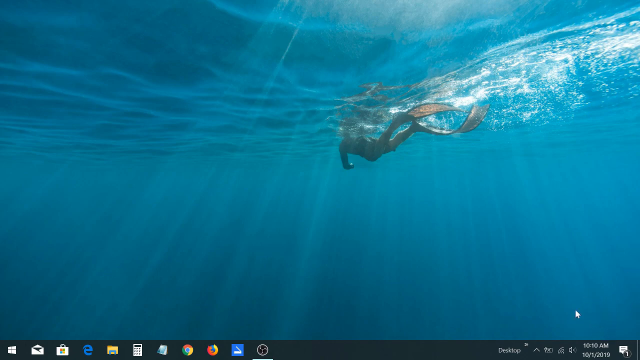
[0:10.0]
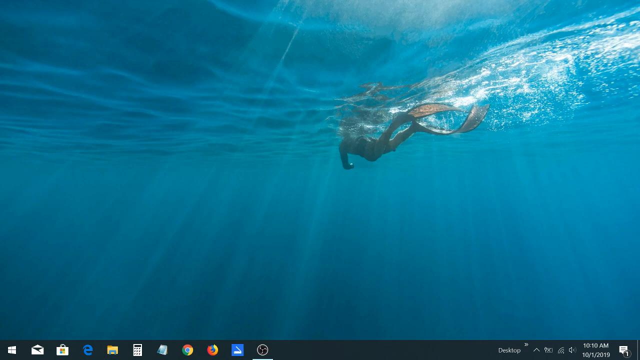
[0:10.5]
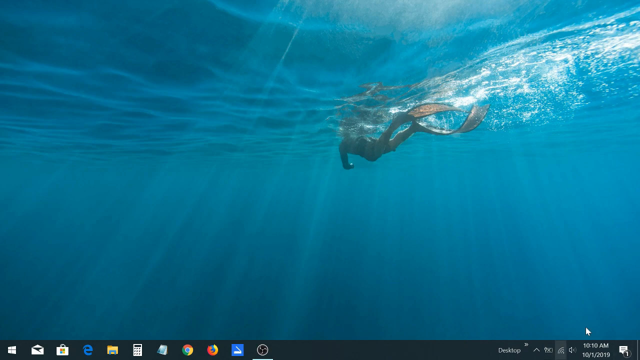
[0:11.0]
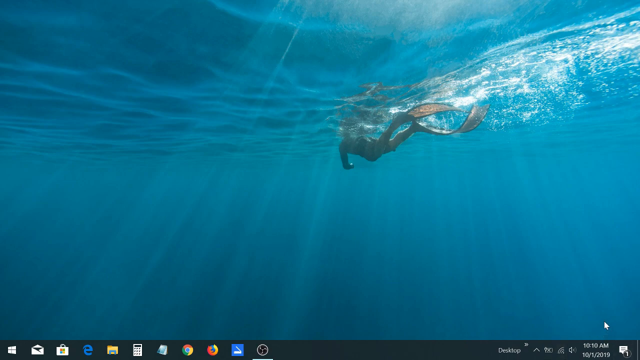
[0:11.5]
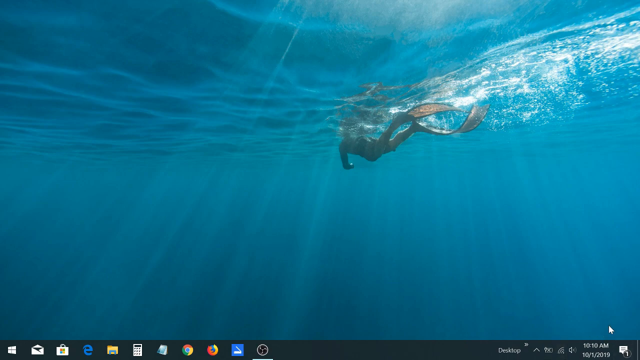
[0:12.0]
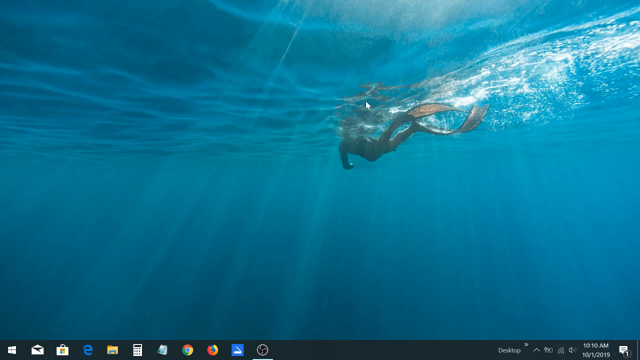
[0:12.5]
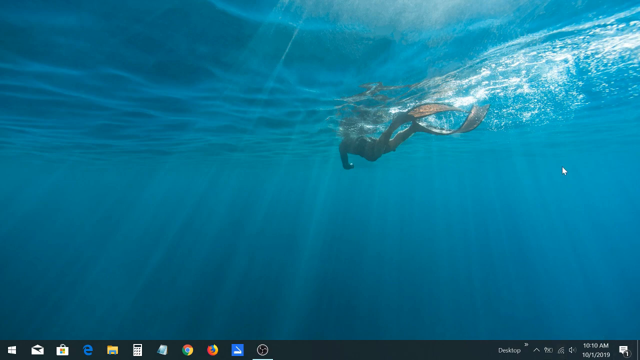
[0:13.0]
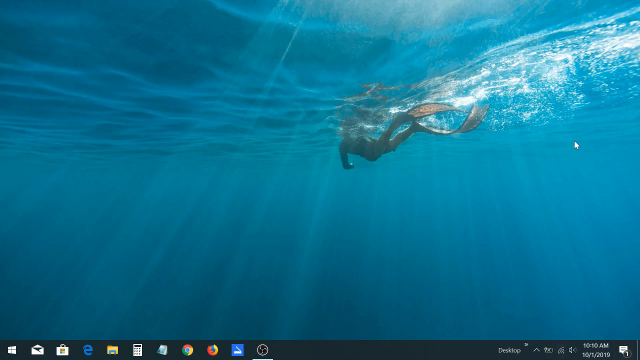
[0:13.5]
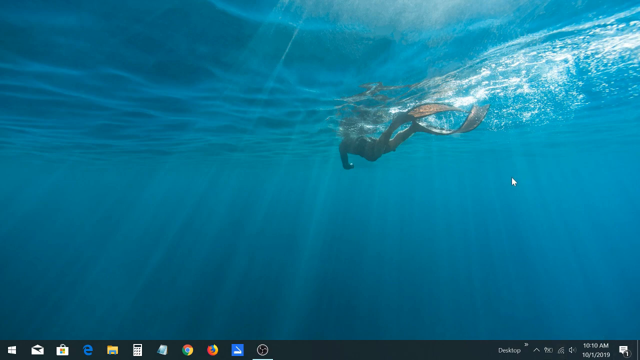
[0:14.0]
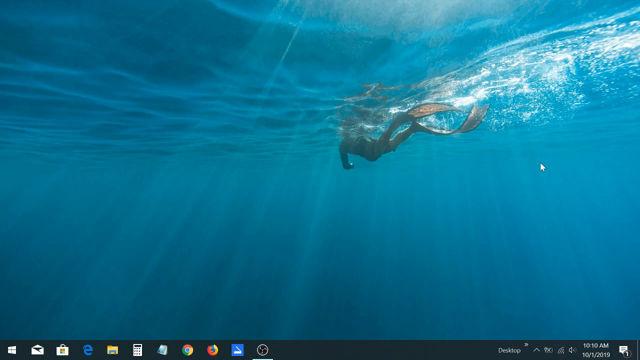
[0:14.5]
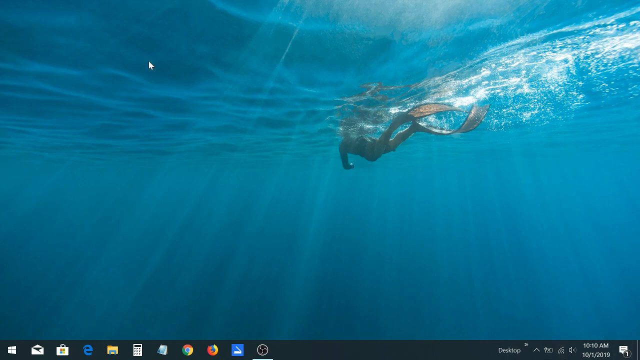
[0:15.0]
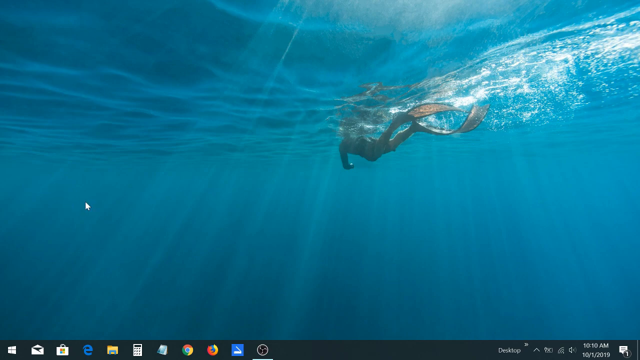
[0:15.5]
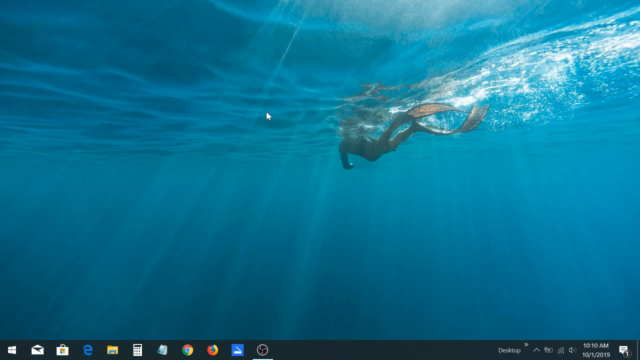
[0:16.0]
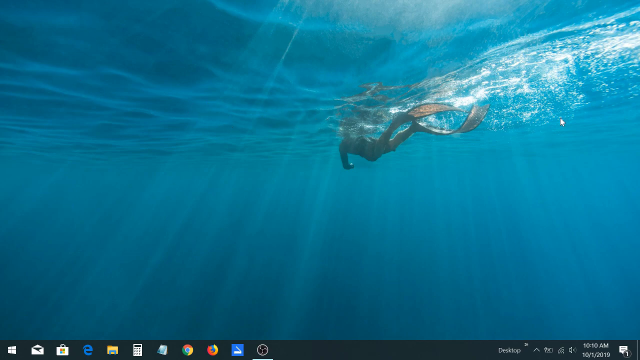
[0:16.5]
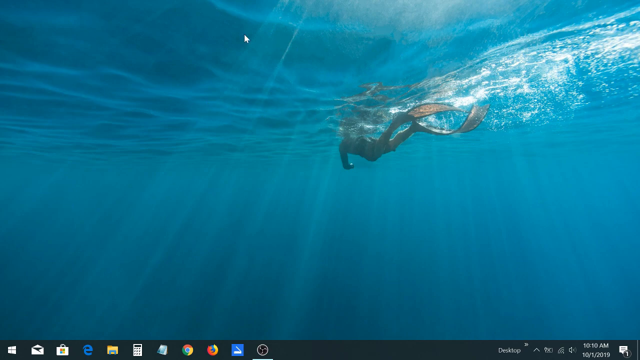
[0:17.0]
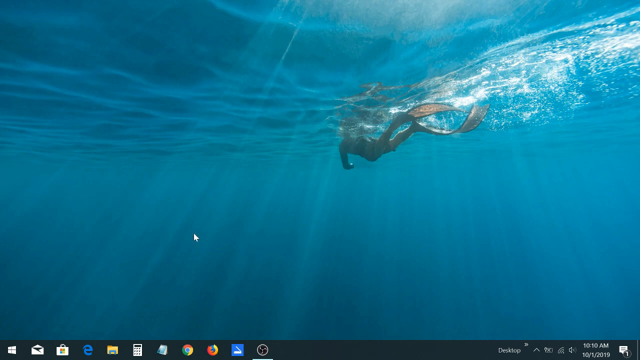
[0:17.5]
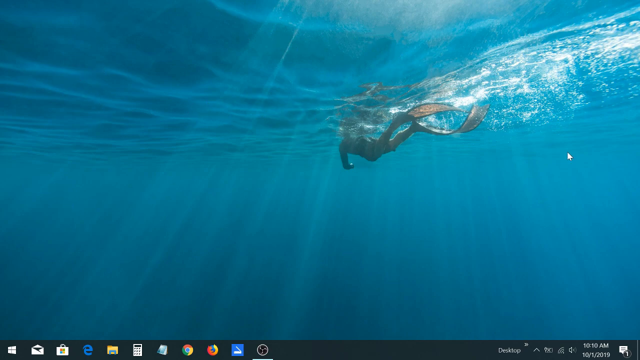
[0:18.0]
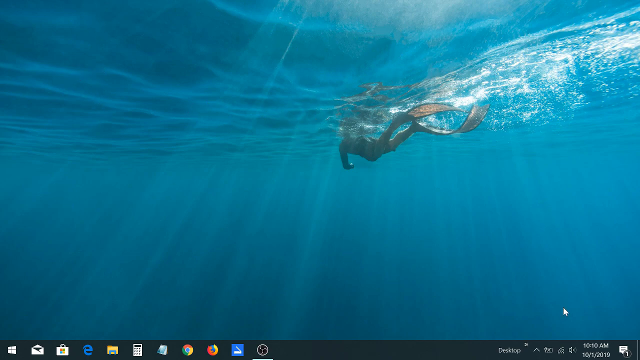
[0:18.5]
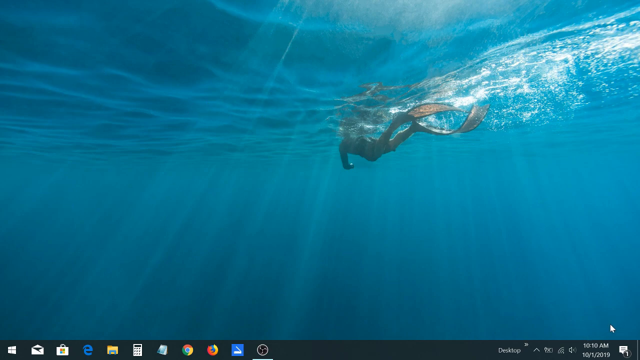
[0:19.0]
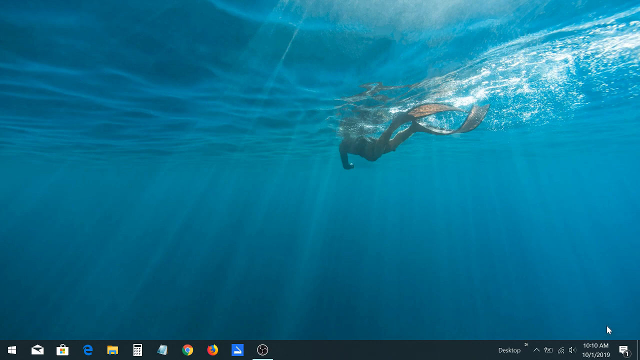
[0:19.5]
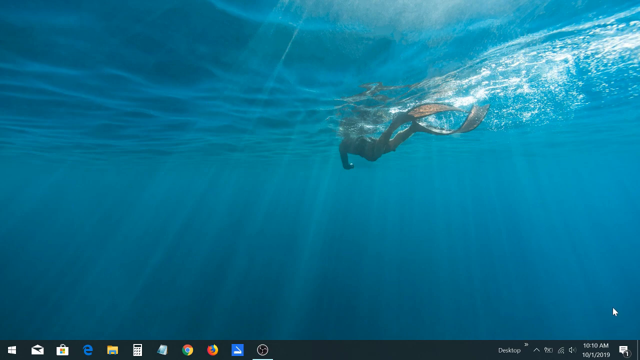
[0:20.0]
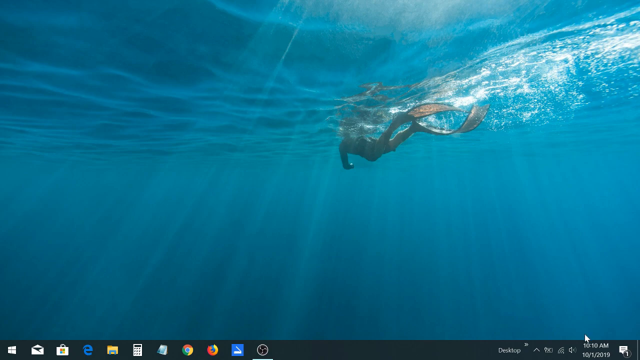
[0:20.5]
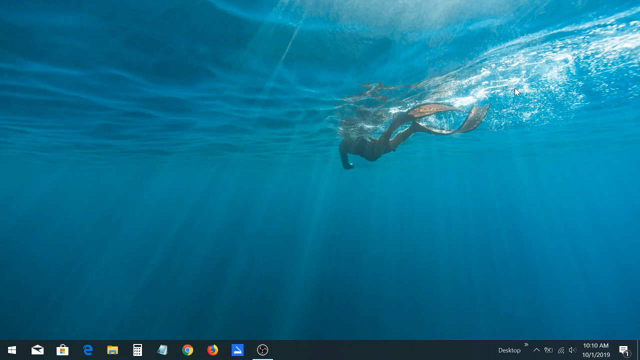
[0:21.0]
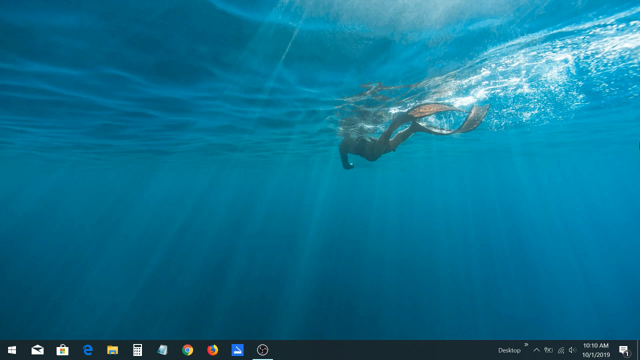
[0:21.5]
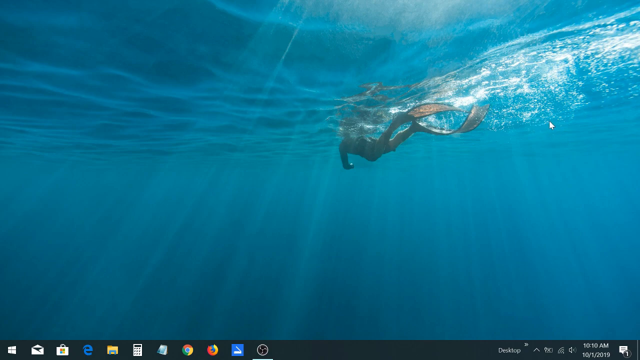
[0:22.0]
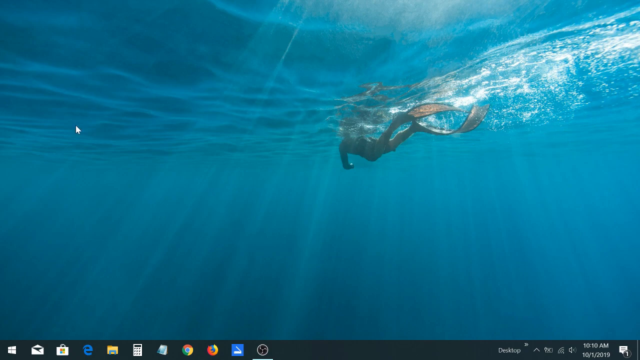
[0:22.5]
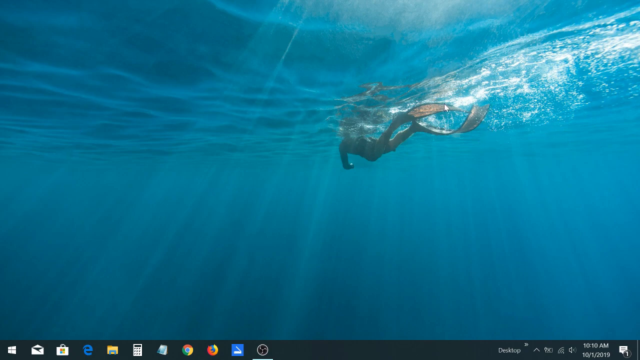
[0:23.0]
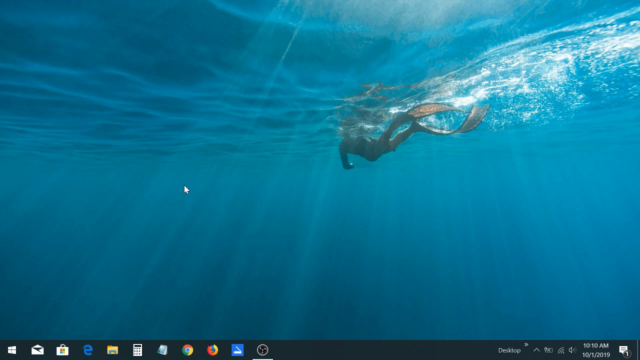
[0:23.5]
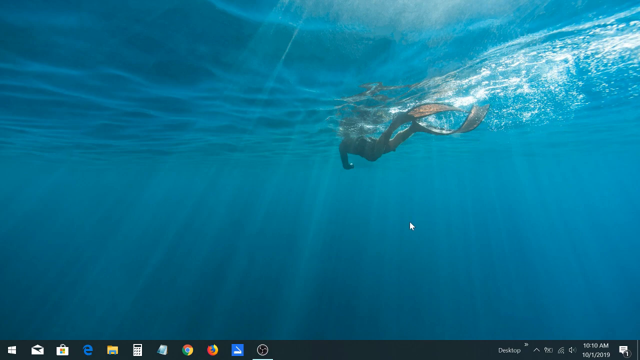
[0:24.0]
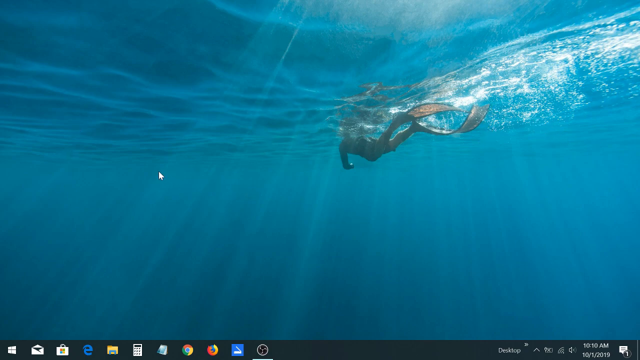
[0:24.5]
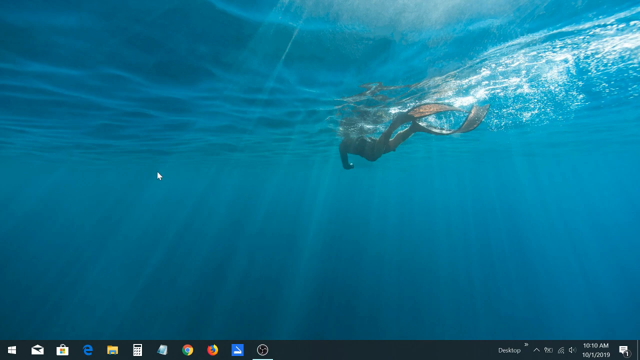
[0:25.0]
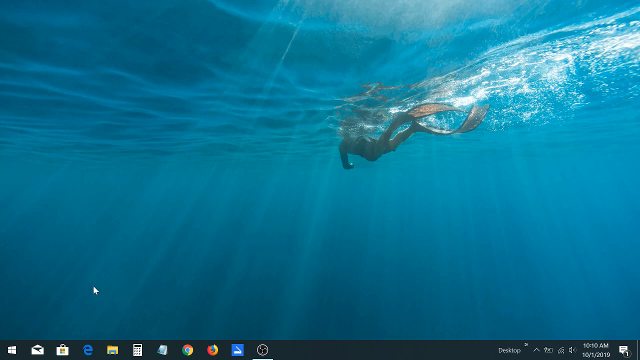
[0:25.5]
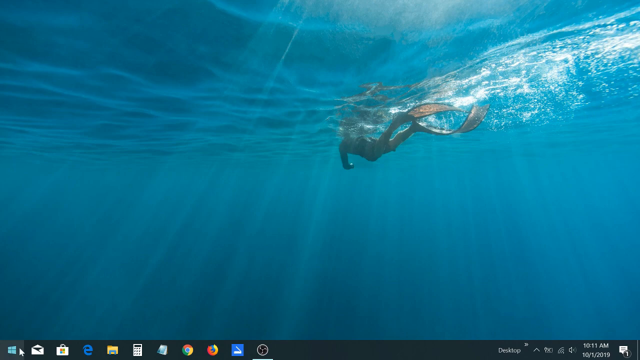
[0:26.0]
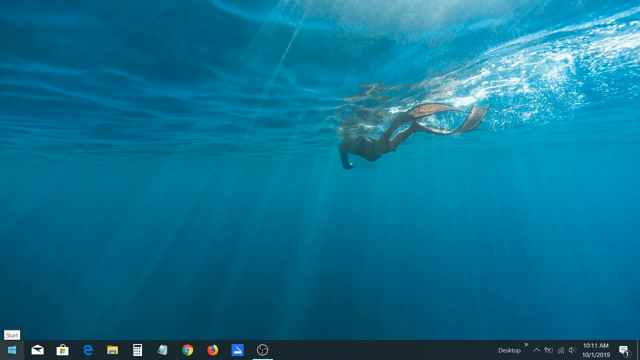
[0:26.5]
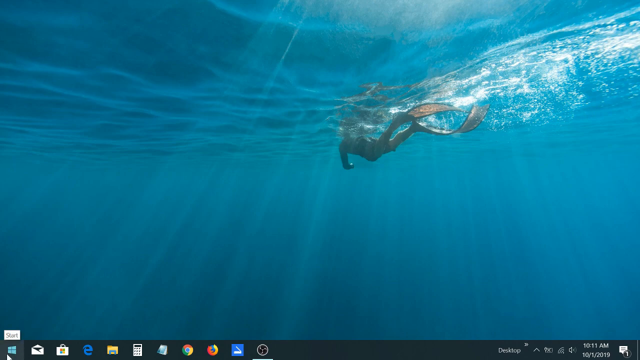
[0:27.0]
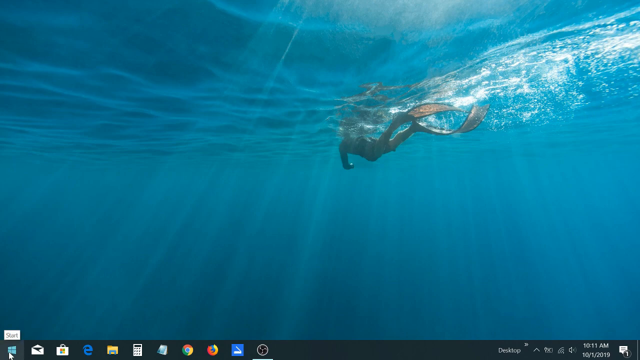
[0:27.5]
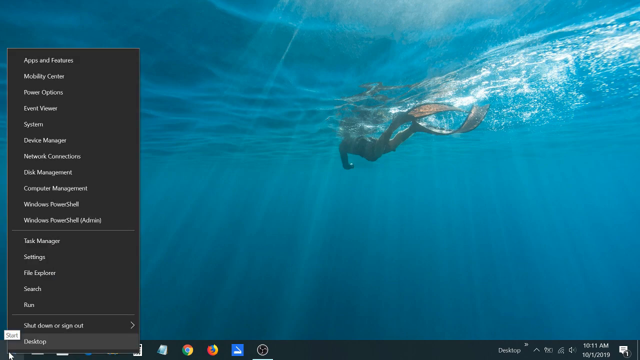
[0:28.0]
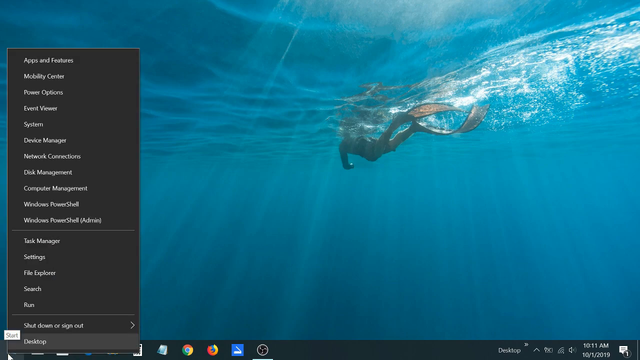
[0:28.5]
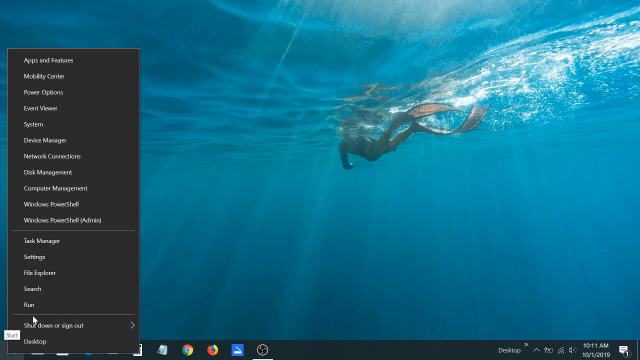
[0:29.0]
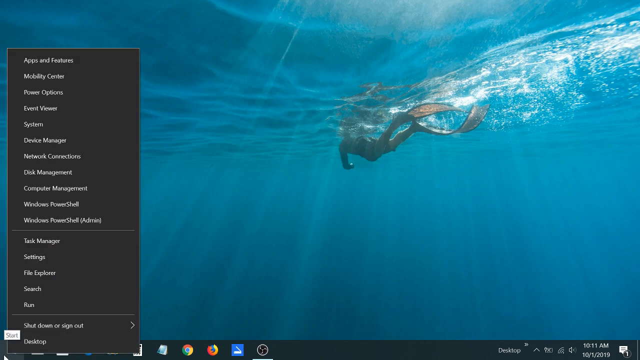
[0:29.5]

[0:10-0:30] The desktop wallpaper of a scuba diver just barely under the water's surface remains on the screen. Someone moves the mouse very fast all around the screen. The Windows taskbar is visible with the clock, speaker and wifi icons, and there is a notification on it. The person clicks the task menu and raises it up.